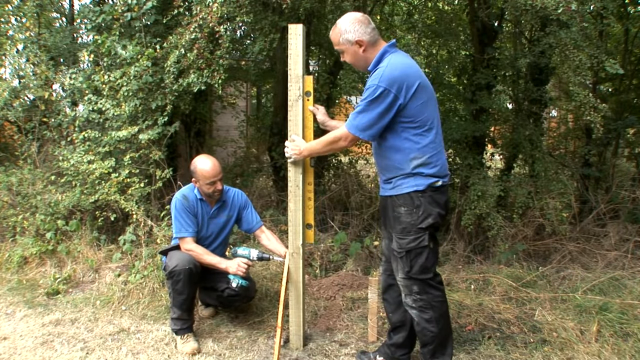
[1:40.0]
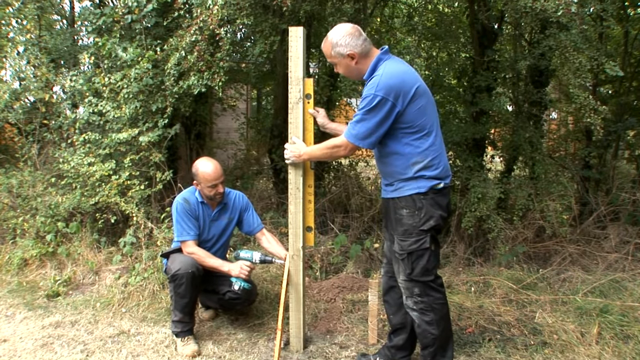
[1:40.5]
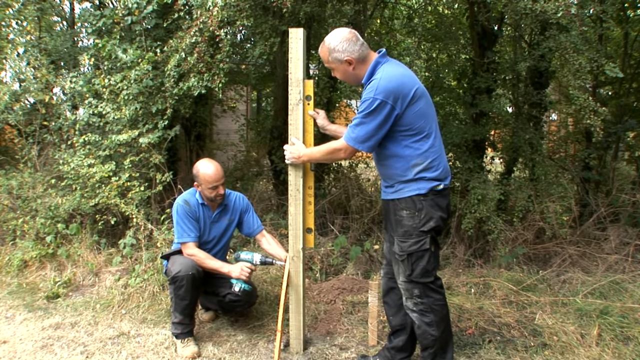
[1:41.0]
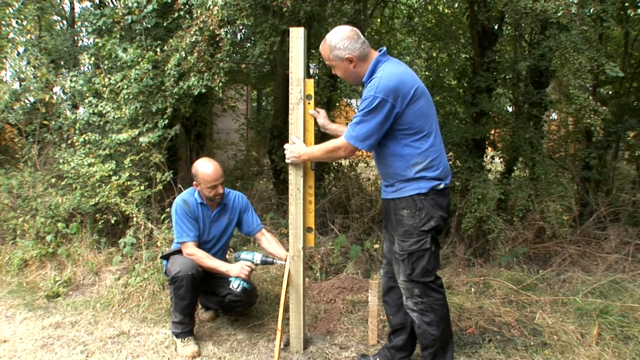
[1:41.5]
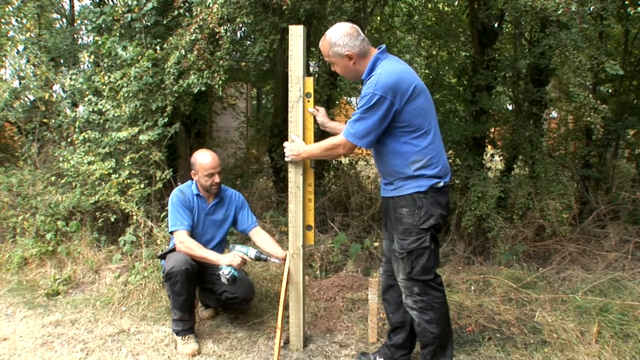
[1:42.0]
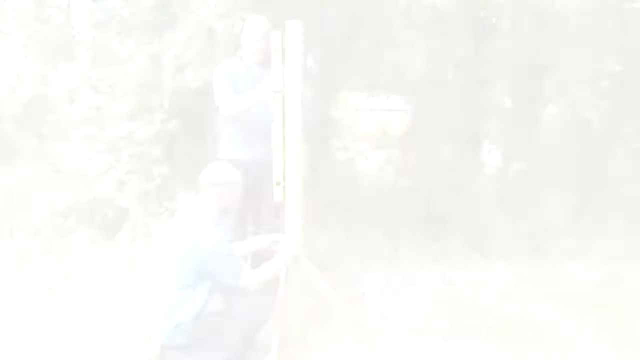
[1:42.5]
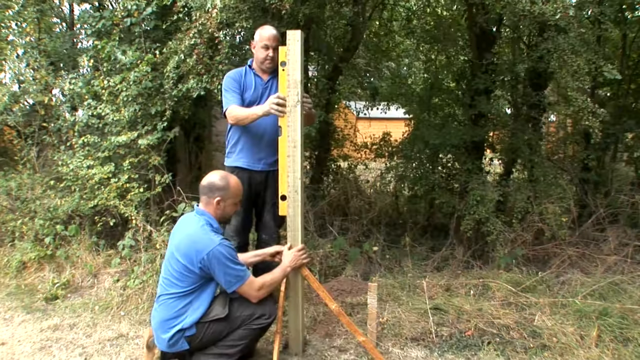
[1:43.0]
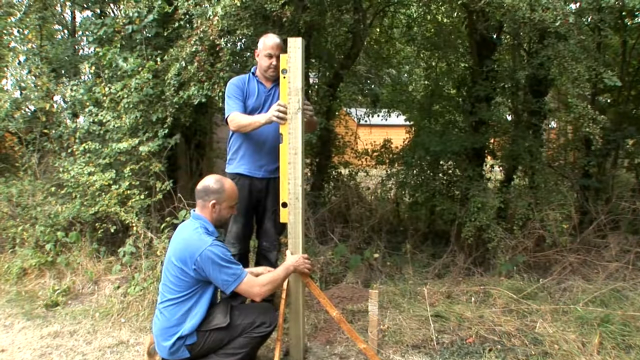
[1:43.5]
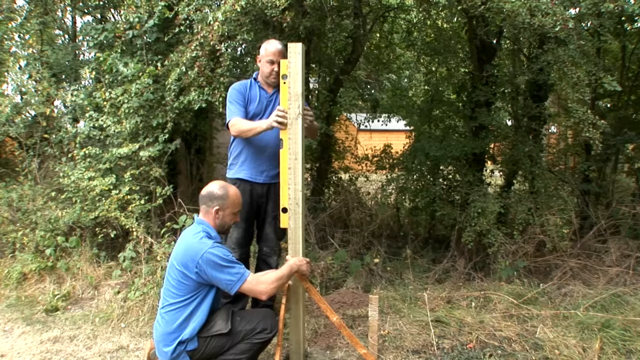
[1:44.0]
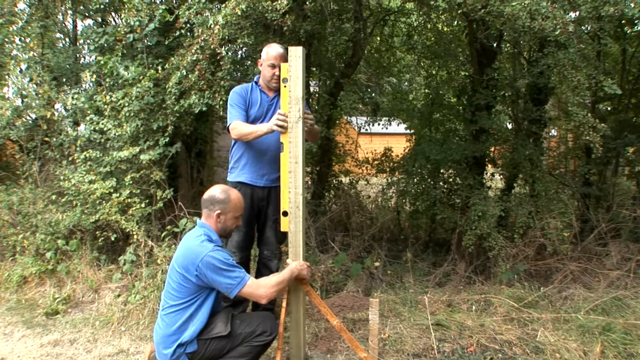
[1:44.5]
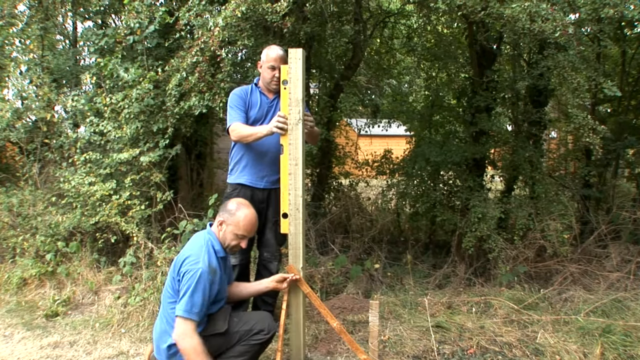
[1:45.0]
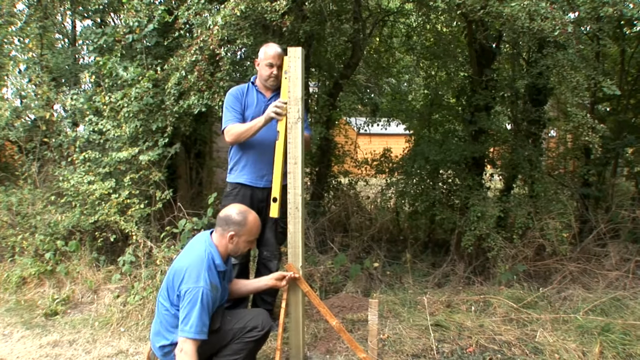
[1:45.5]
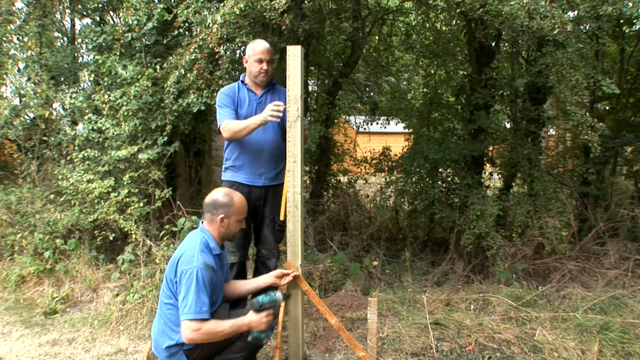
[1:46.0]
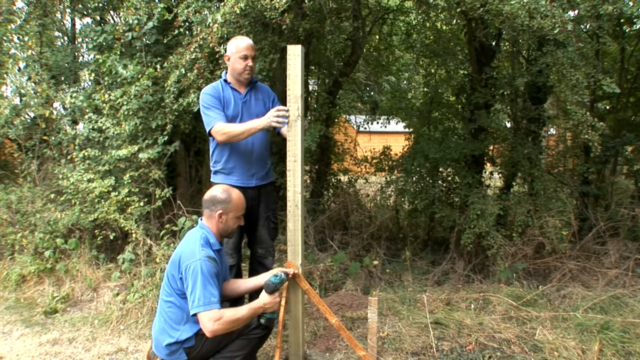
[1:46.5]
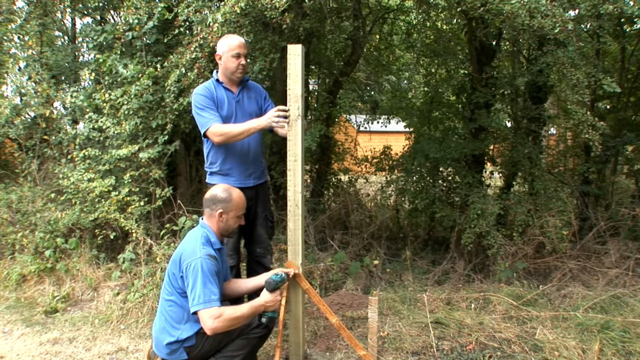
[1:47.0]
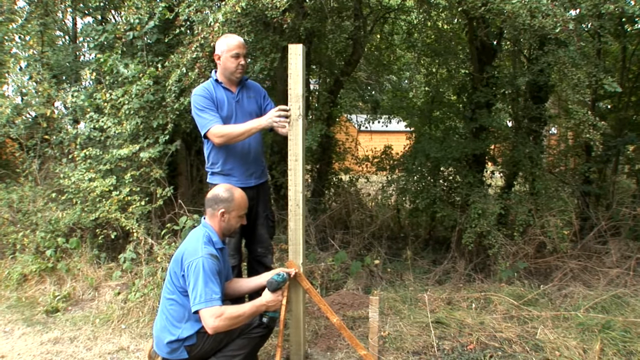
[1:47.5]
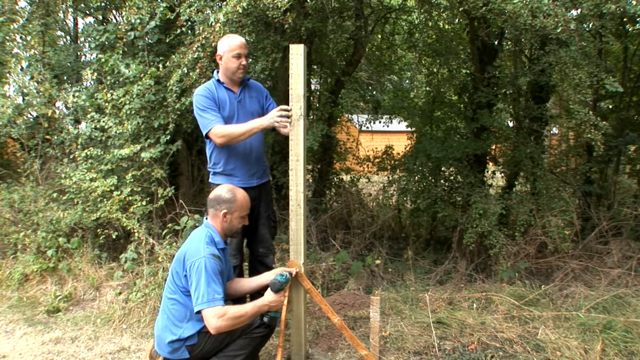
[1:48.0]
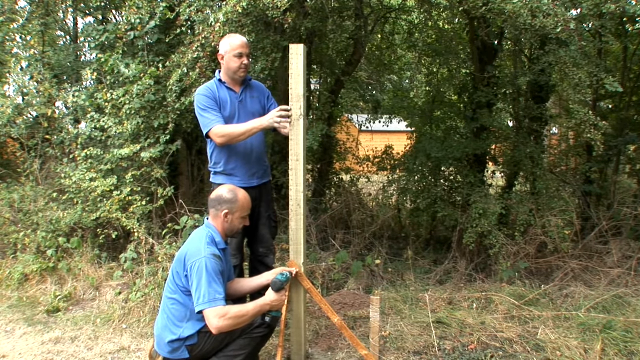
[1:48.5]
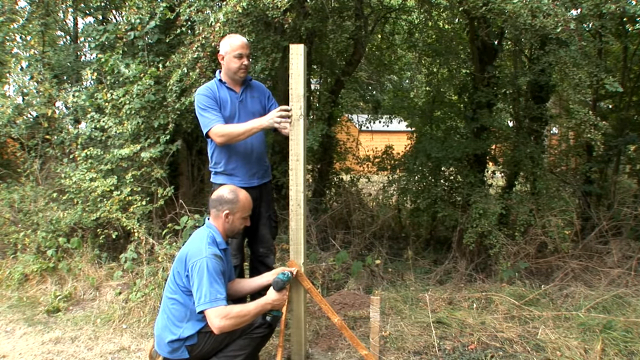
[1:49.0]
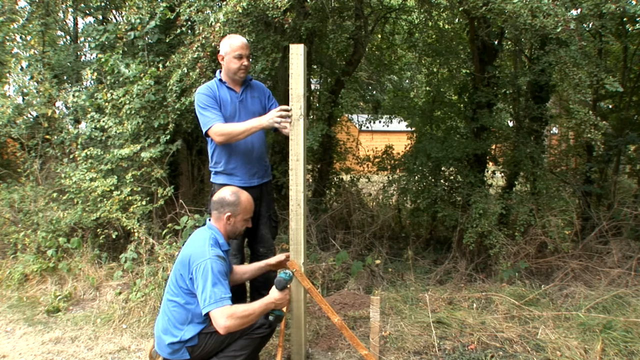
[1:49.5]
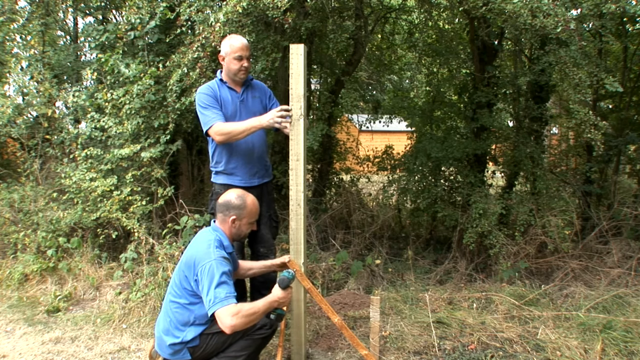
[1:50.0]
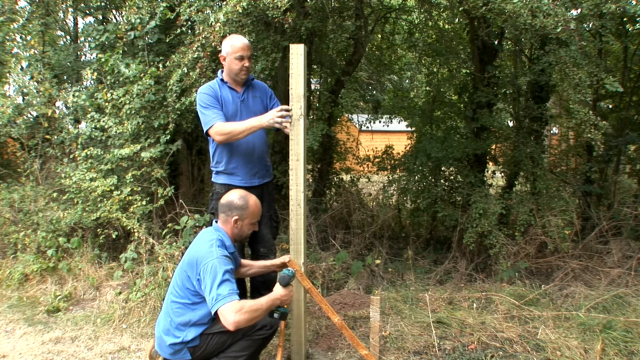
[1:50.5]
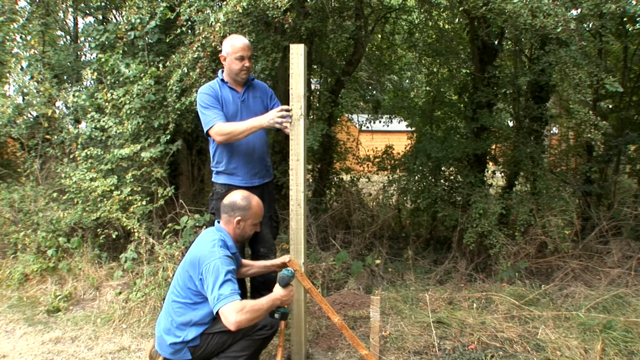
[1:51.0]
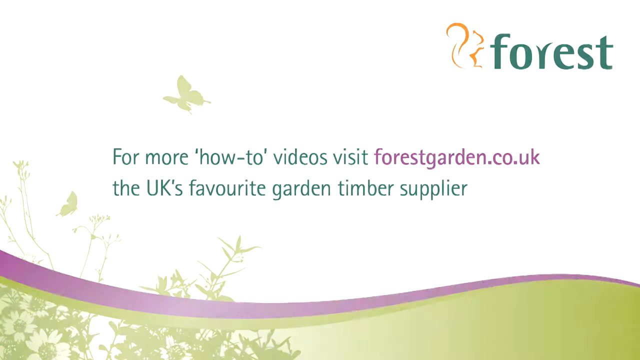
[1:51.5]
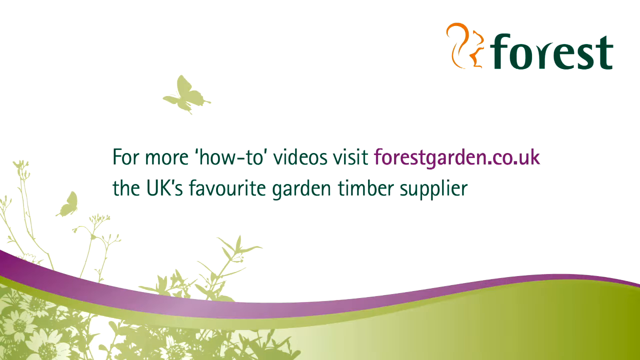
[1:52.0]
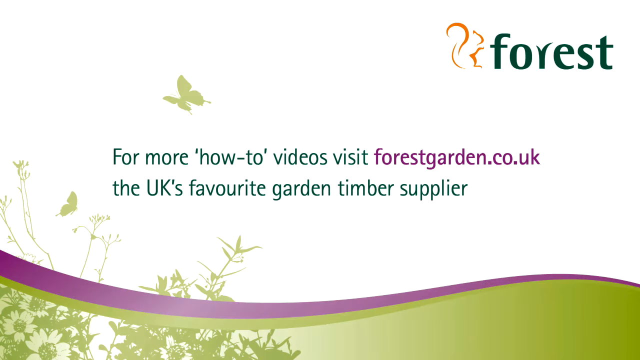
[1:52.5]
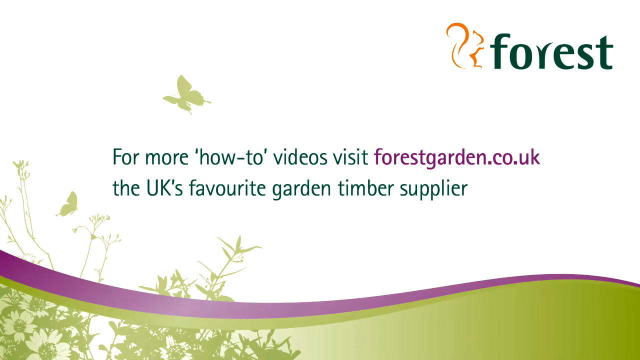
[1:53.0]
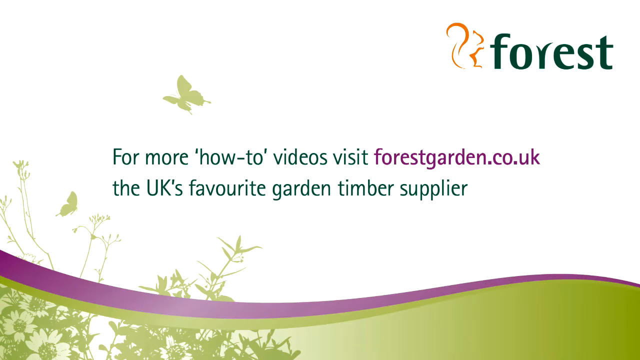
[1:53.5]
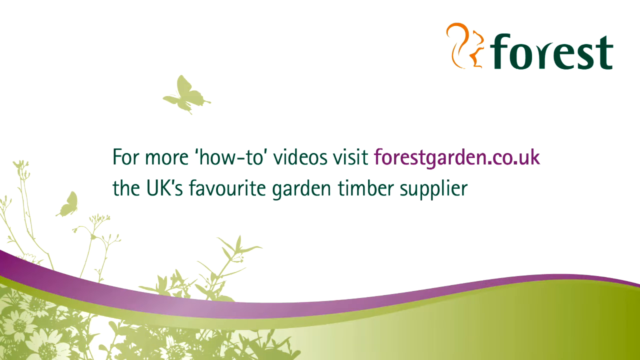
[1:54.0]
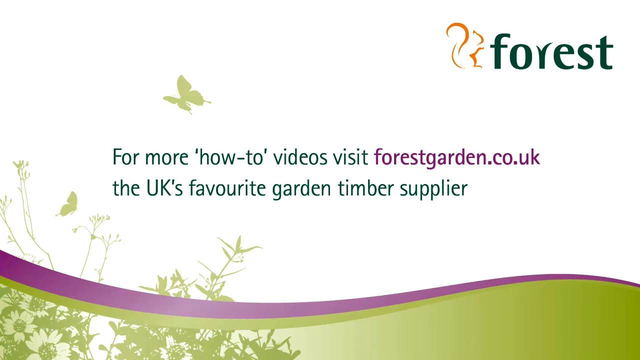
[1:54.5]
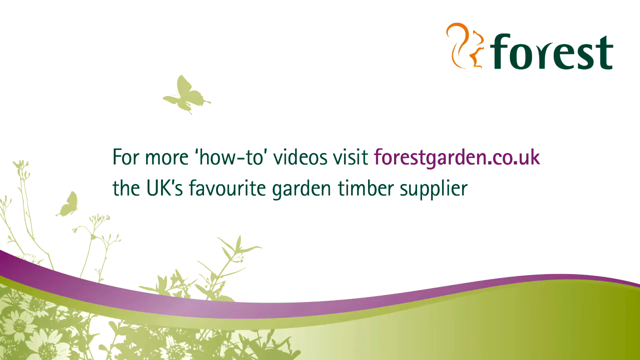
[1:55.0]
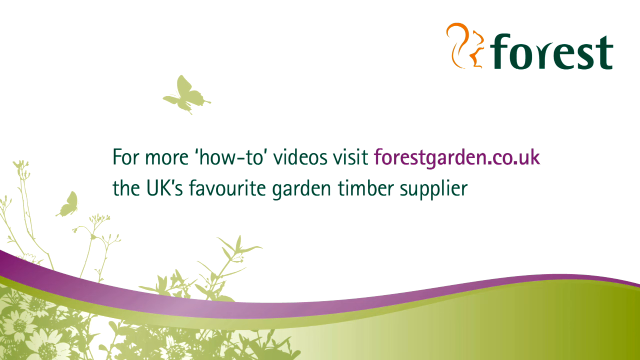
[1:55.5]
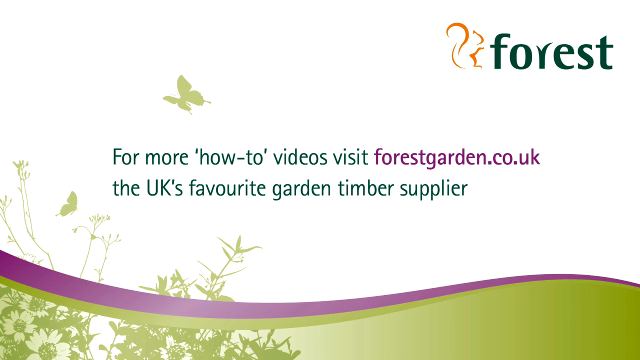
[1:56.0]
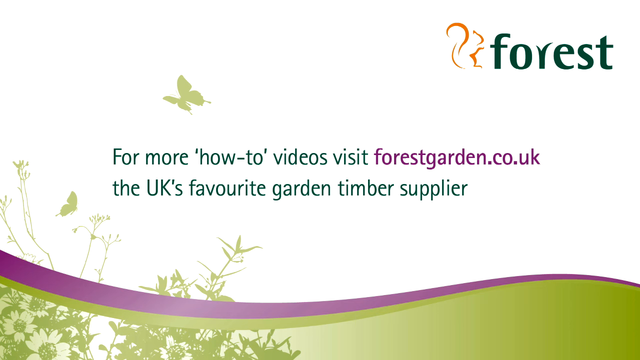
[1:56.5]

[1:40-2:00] A man puts a yellow level on the side of a wooden fence post to make sure it is straight up and down and left and right. Meanwhile, another man in a blue shirt, black pants and brown boots is bent down on the ground with a cordless screwdriver, screwing dark orange braces around the bottom of the post so it is sturdy. In the background are grass, weeds and green-leaved trees, and through the trees a small brown shed with a dark gray roof is visible. The video then cuts to an ending that says "Forest," the name of the video's creator, with the title "How to Install a Fence Post into Soil."